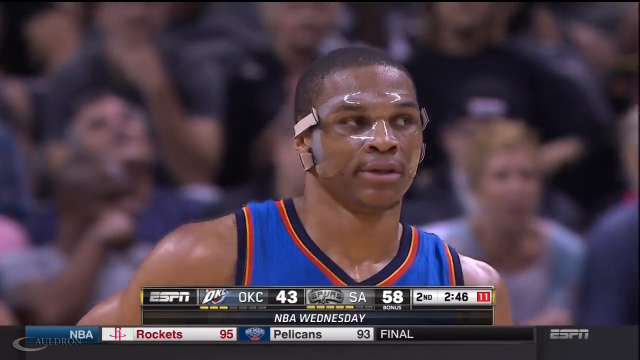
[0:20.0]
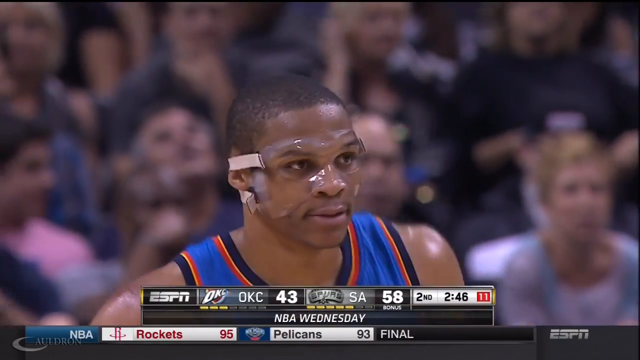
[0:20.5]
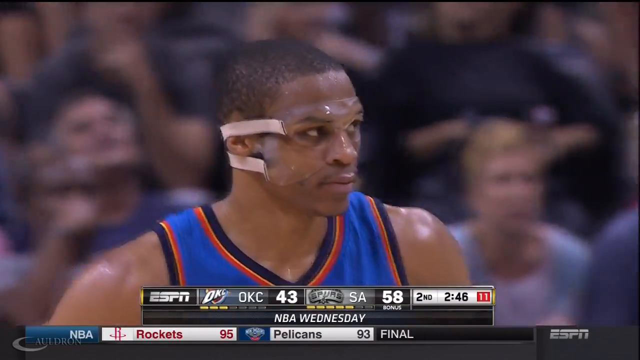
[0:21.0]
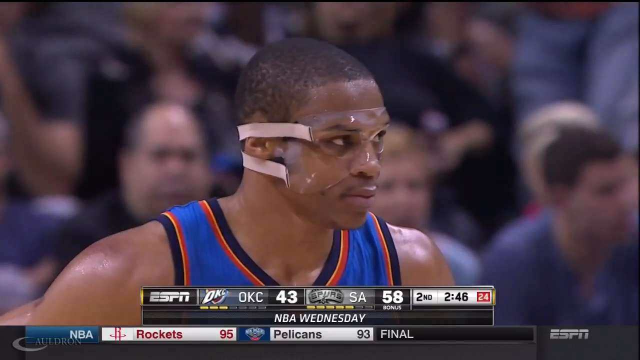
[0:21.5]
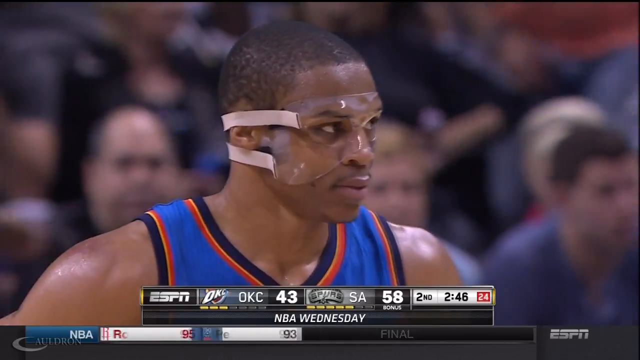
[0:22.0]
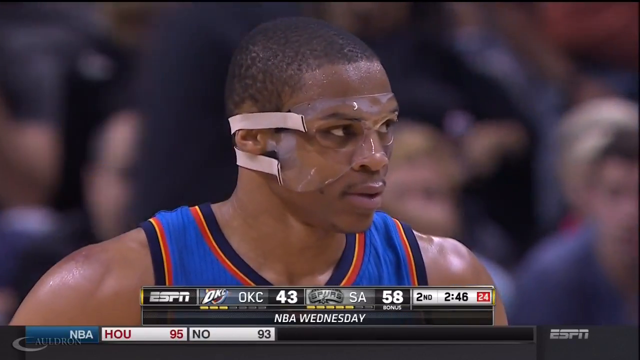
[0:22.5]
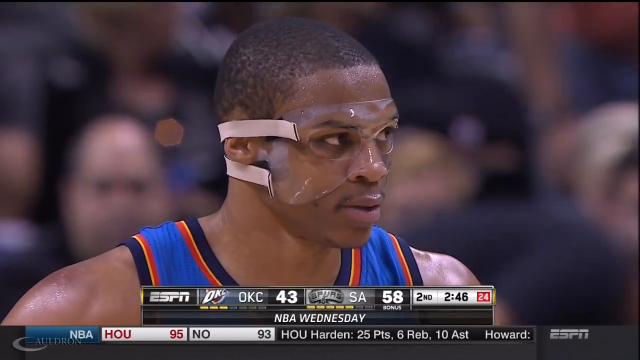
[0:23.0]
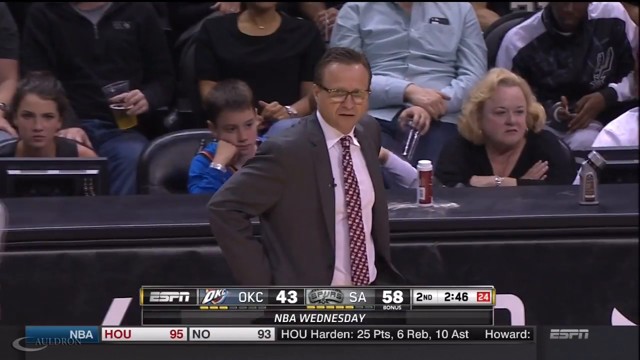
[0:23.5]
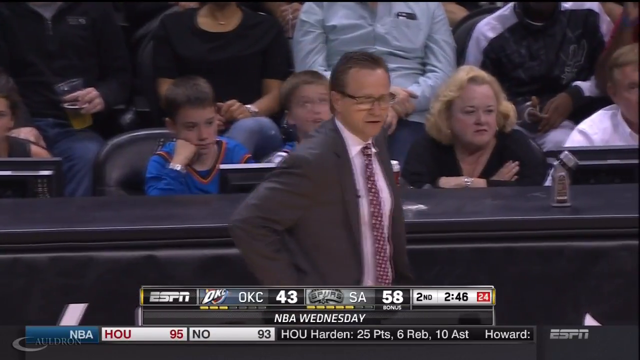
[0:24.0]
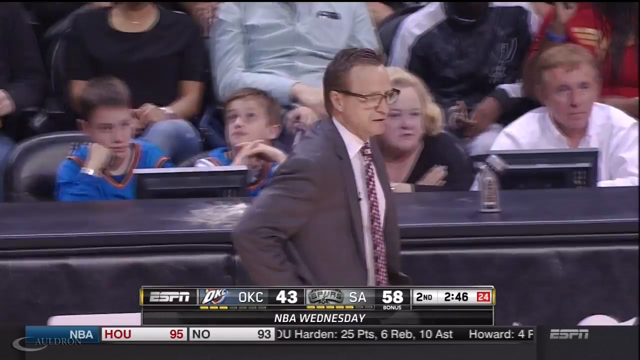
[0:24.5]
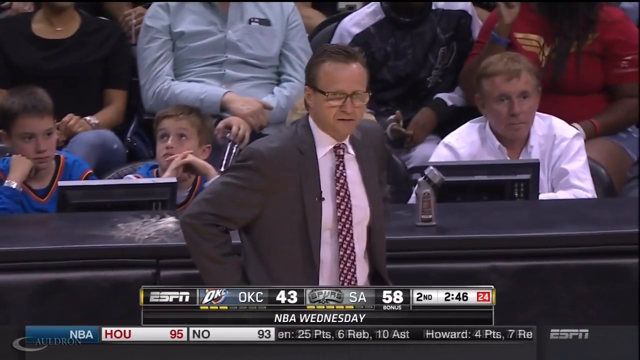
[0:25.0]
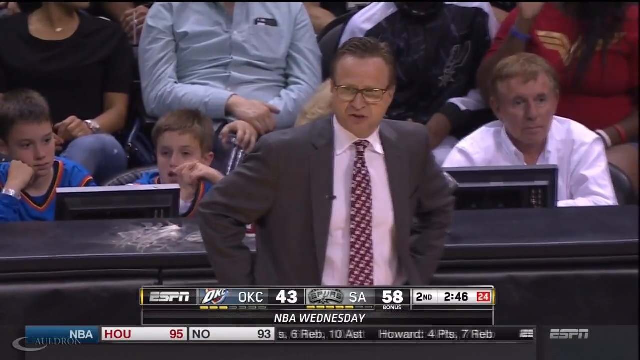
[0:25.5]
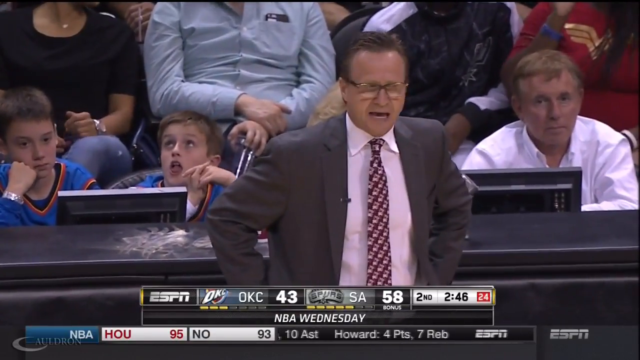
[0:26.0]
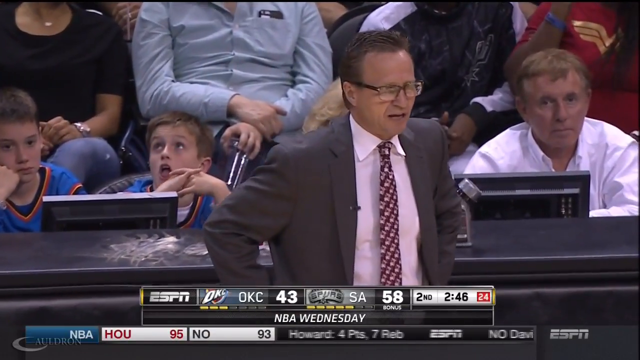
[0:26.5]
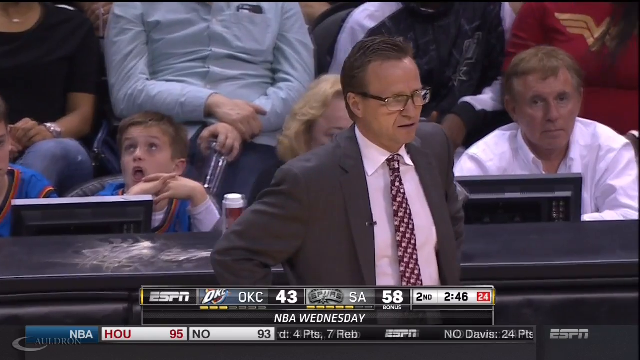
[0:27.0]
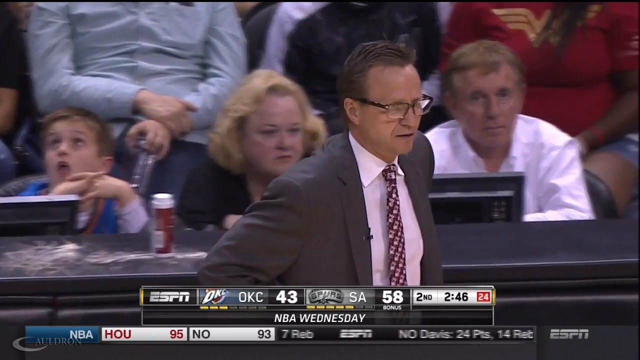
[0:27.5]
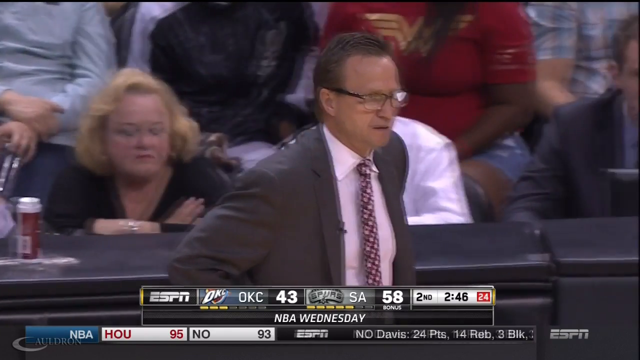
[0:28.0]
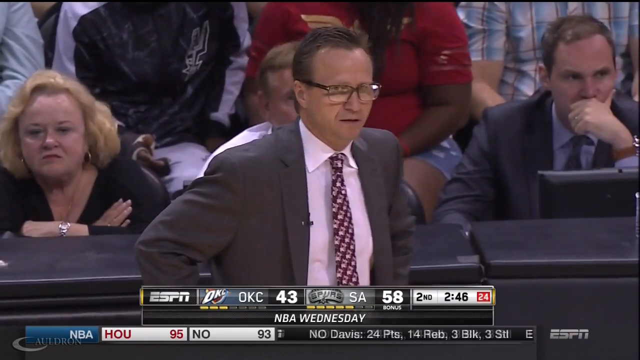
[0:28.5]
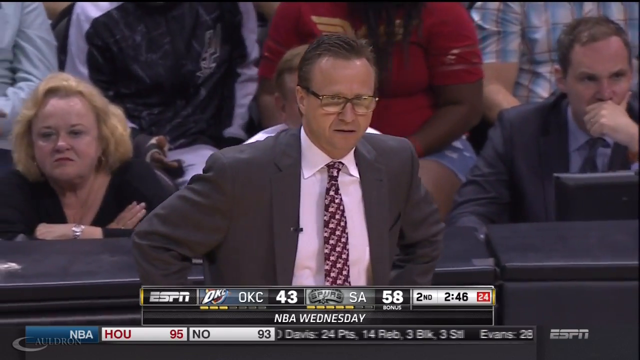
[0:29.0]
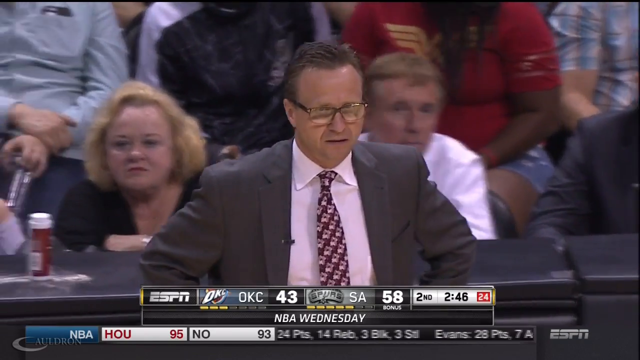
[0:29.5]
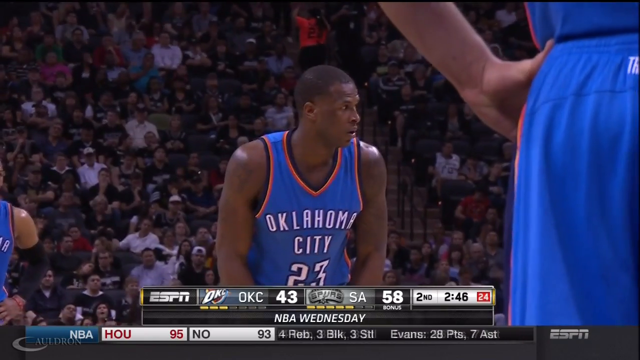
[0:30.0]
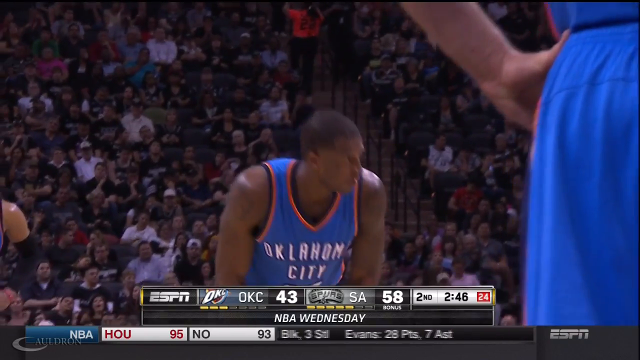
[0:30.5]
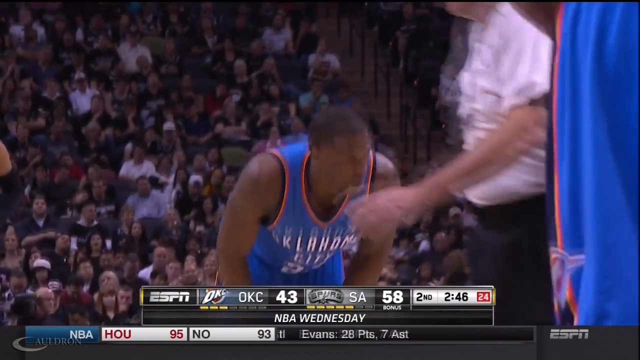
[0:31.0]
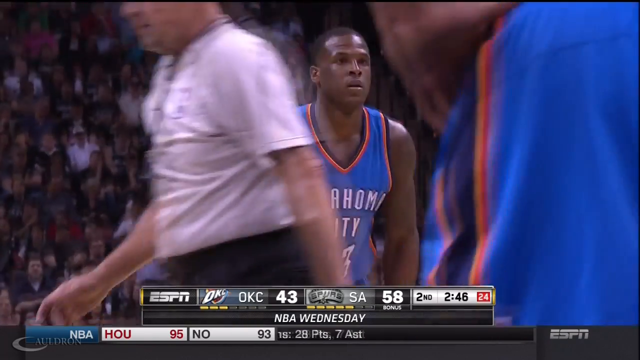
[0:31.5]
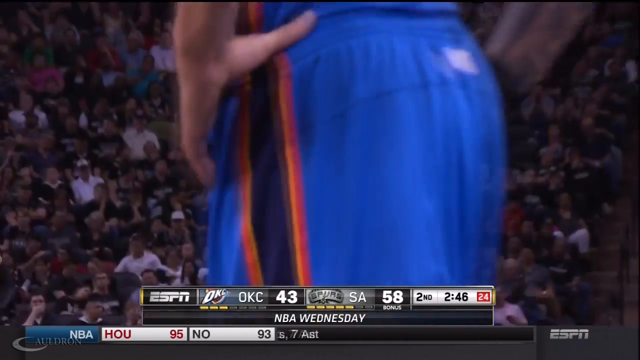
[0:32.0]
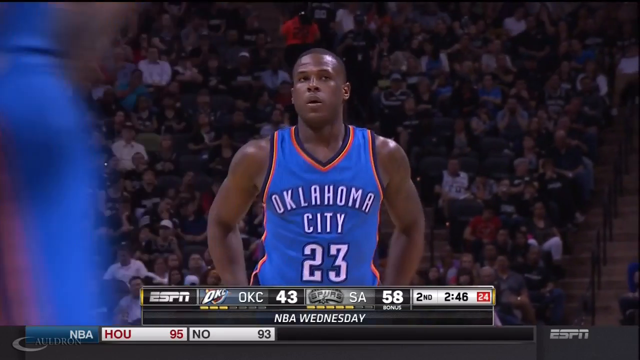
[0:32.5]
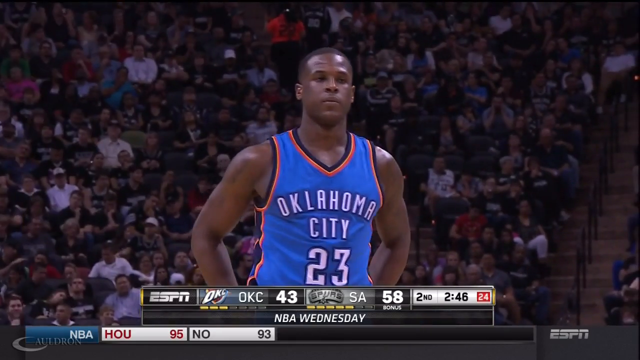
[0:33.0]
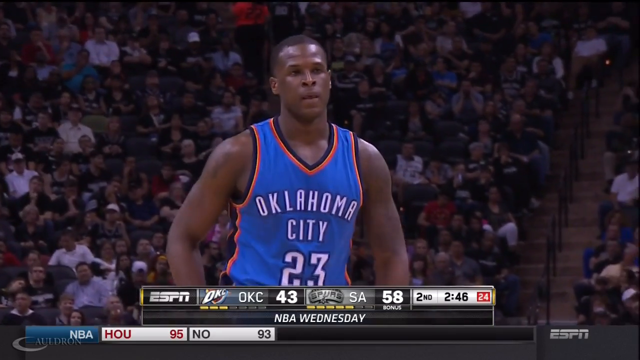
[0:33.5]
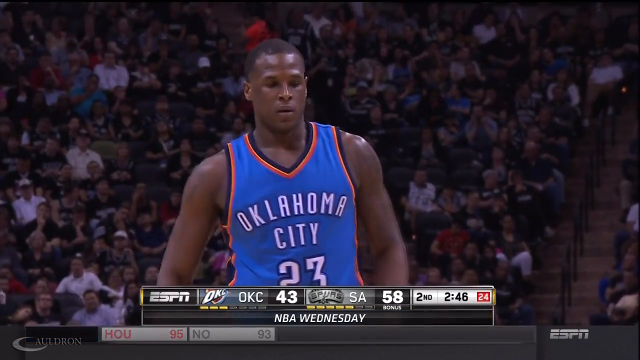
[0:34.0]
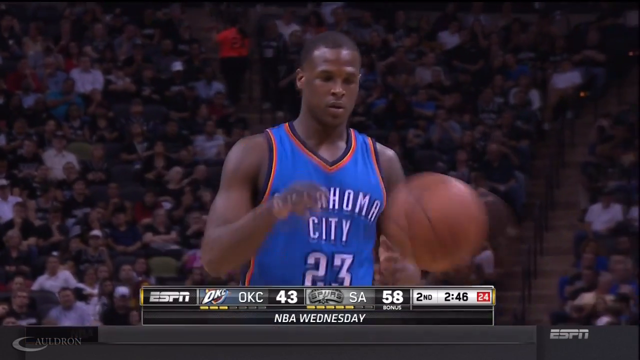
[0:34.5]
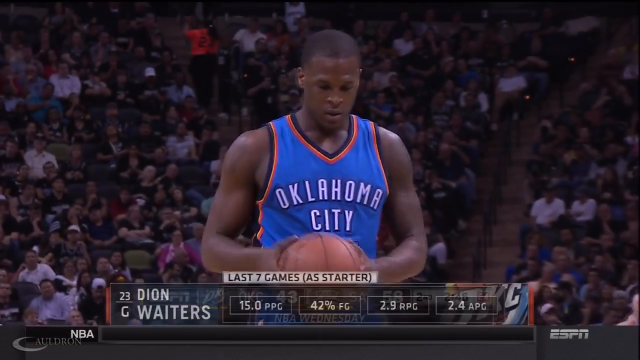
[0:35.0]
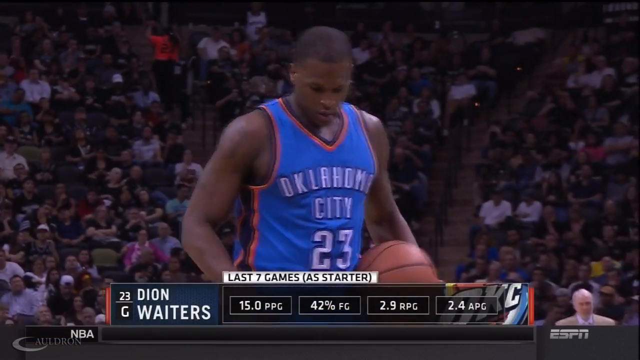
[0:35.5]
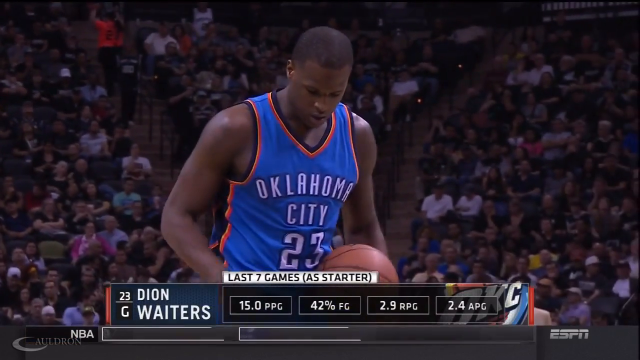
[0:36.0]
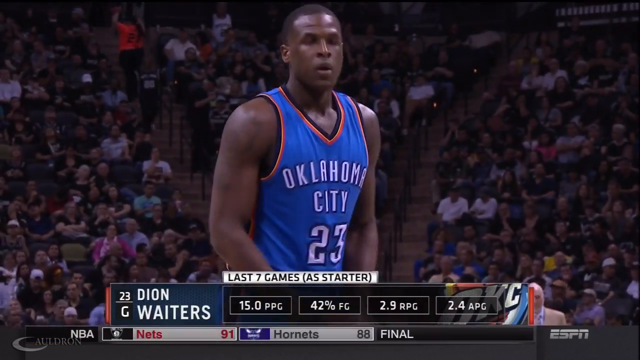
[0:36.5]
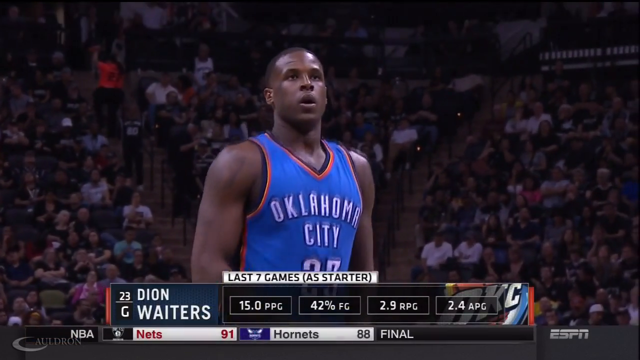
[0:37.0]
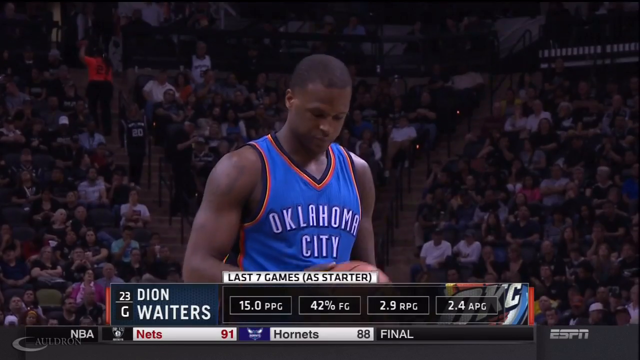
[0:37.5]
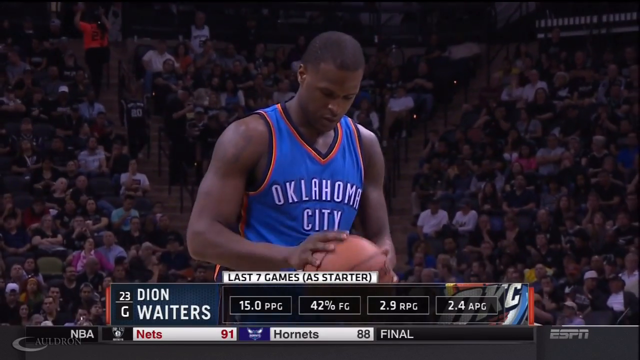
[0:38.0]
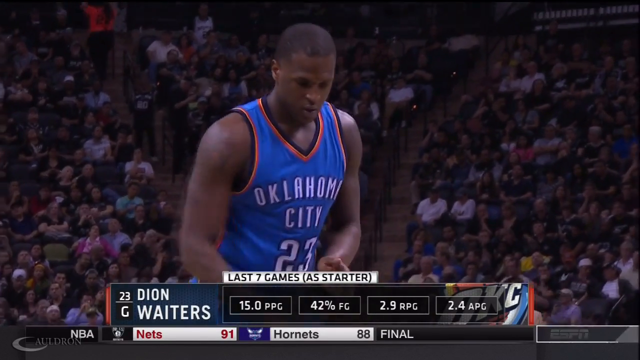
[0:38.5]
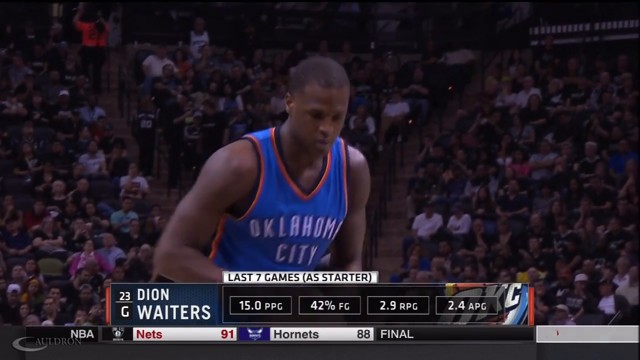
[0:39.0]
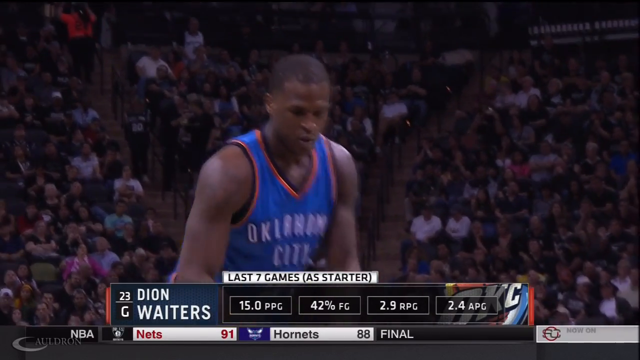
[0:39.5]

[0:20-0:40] A close-up shows a basketball player who appears to have protective gear on his face; it looks like a transparent face shield attached with white straps that go round the back of his head across his ears. He looks focused, with a fairly neutral expression. Next comes a close-up of a man in a suit with glasses and dark hair, a white shirt and a grey jacket, who appears to be a manager of some kind, looking over the game with anticipation. Close-ups of various players show that the blue team have "Oklahoma City" on the front of their vests. The audience is visible in the background, appearing to stir slightly but mostly still and fixated on the game, most with neutral, concentrated expressions.